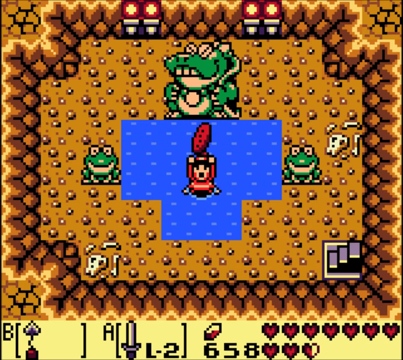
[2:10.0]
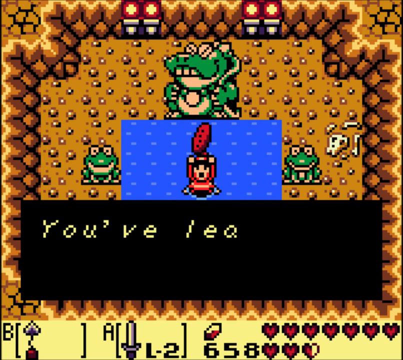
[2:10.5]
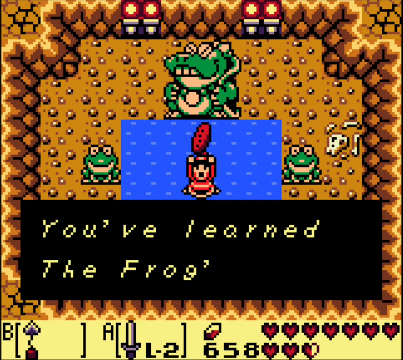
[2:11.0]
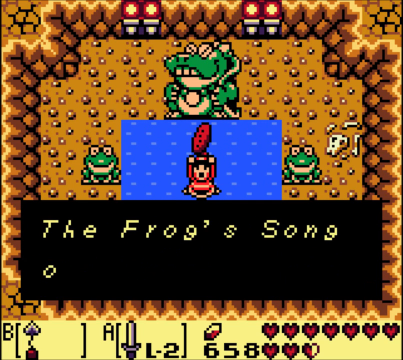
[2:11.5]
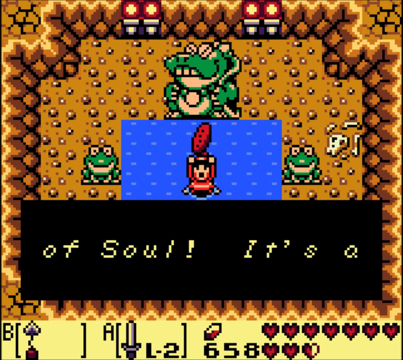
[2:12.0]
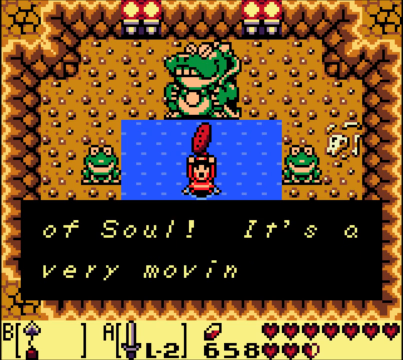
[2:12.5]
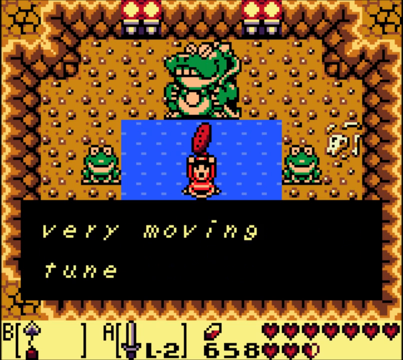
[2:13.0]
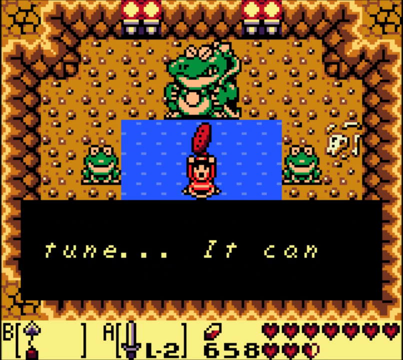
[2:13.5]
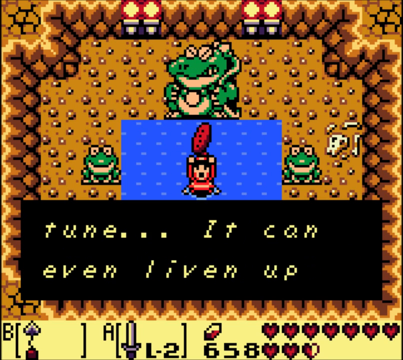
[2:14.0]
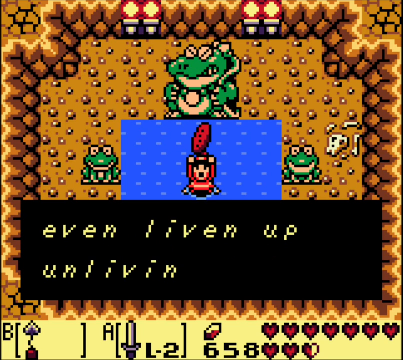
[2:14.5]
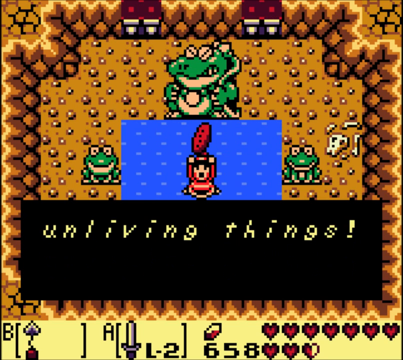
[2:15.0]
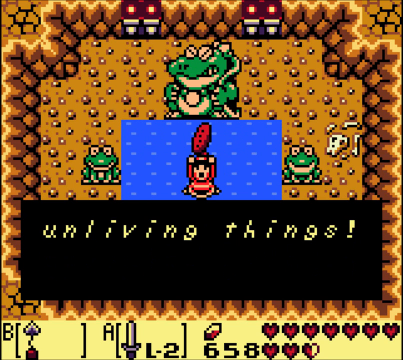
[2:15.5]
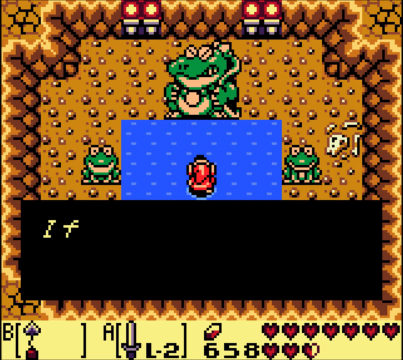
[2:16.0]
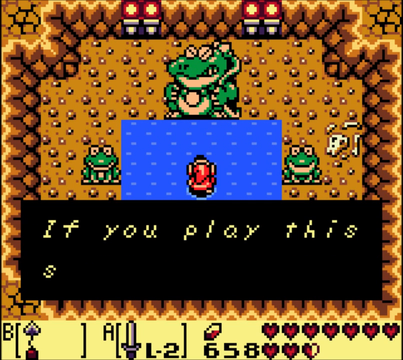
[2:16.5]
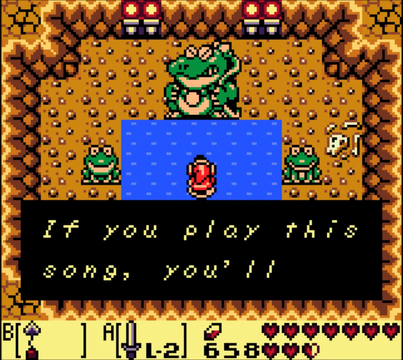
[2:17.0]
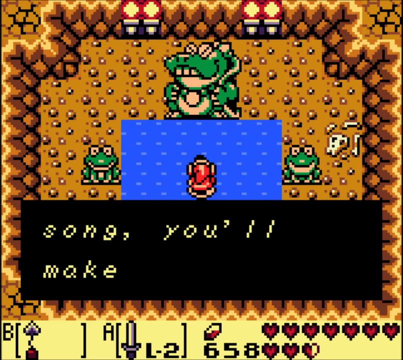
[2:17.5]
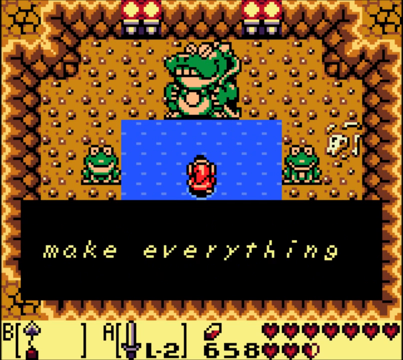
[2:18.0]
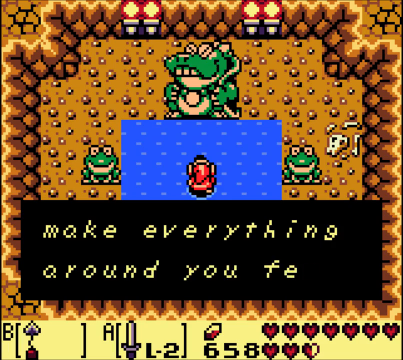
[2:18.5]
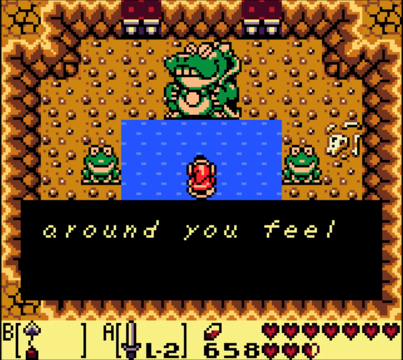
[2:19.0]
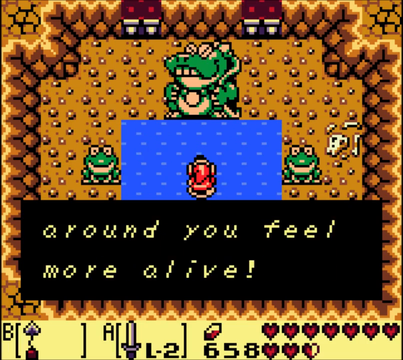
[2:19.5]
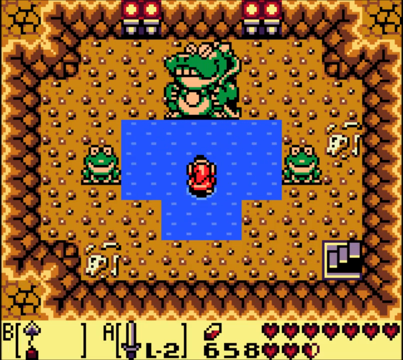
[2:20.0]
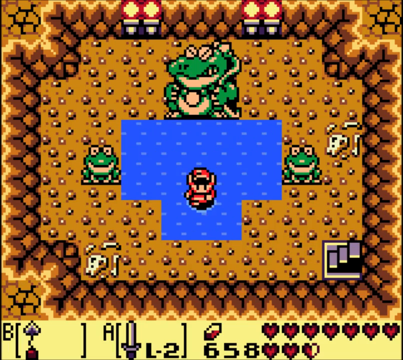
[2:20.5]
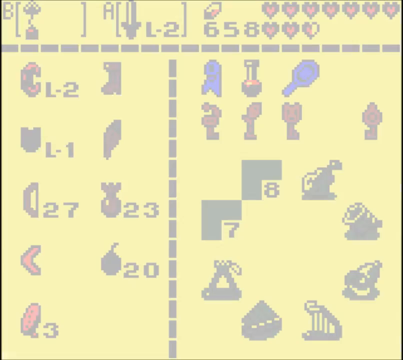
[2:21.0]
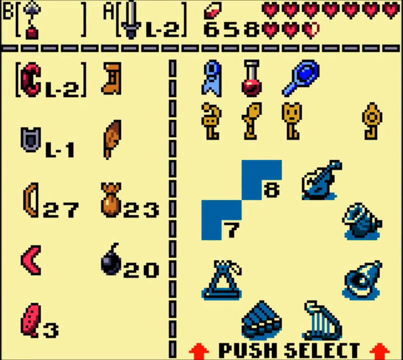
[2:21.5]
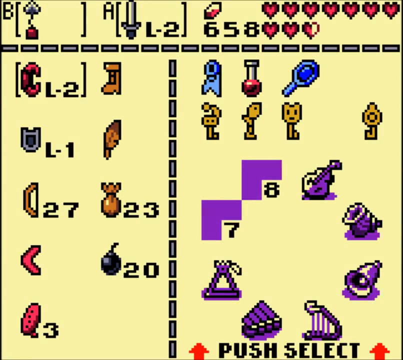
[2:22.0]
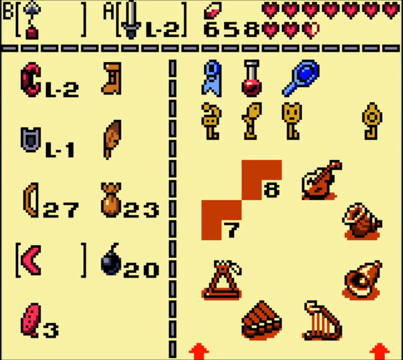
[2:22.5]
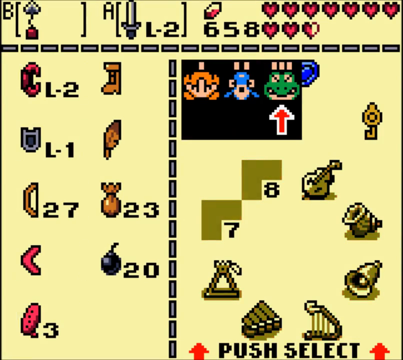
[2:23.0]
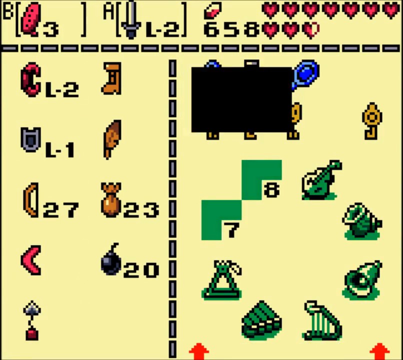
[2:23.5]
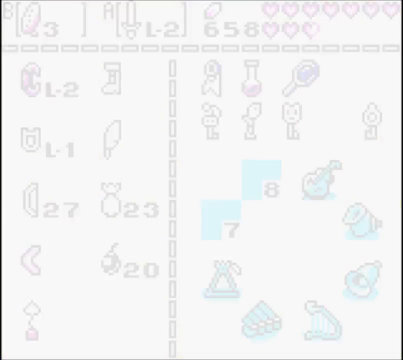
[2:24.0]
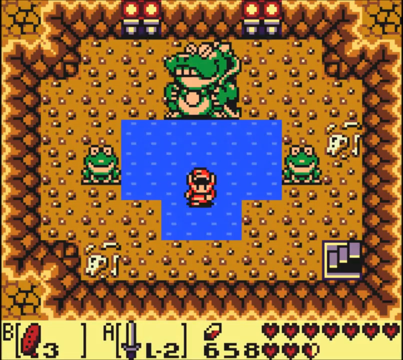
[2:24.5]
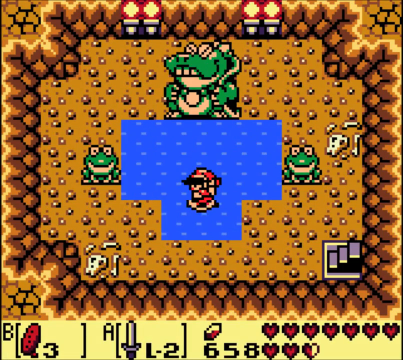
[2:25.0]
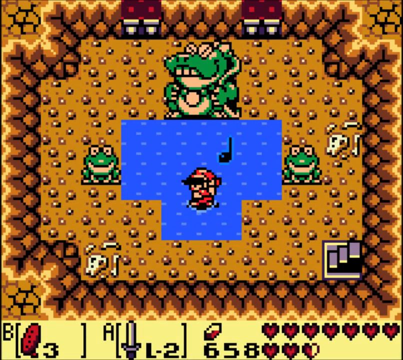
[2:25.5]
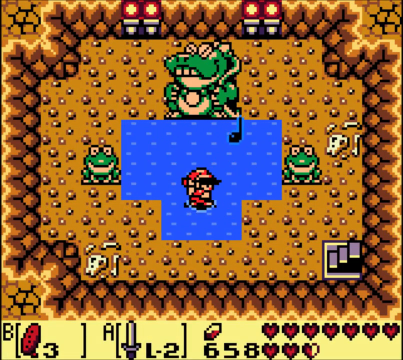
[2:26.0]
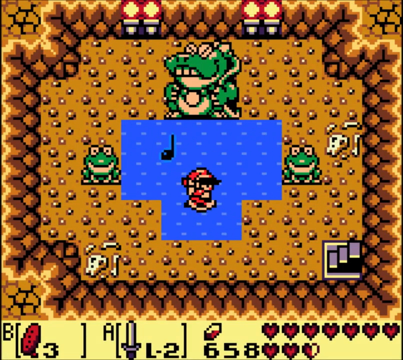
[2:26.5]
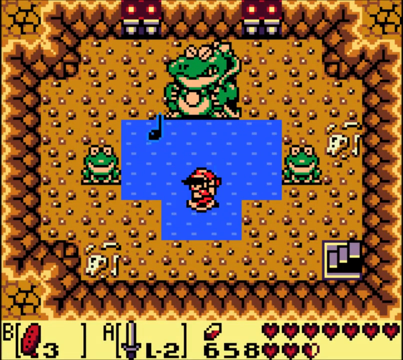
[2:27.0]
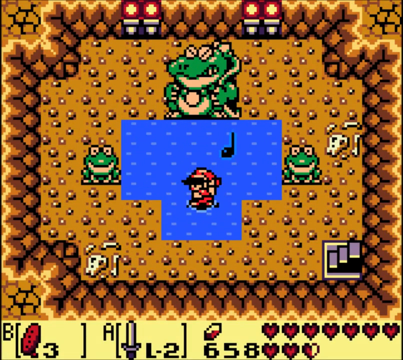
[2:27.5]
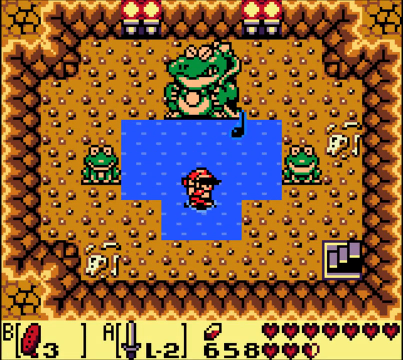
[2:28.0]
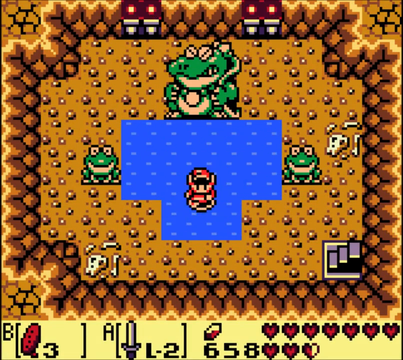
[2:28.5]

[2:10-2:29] Text reads: "you've learned the frog's song of soul, it's very moving tune, it can even liven up unliving things. If you play this song, you'll make everything around you feel more alive." The view cuts to the inventory or character screen, where a number of hearts appear in the top right with the number beside them now reading 658. Below that are various yellow, green, blue and red objects; four of them look like they might be keys. There are a number of musical instruments, including a violin, a bell, and something that looks like it might be a glockenspiel, as well as a couple of green inverted letter L blocks with the numbers 7 and 8. On the opposite side of the screen are what might be weapons or armour: something that looks like a bow with the number 27, and the number 20 beside a picture of a bomb. The watermelon symbol now appears in the bottom left. At the top left of the screen, B relates to some kind of weapon with an arrow, and A indicates a level 2 sword icon. The character sings, as shown by musical notes emanating from him.